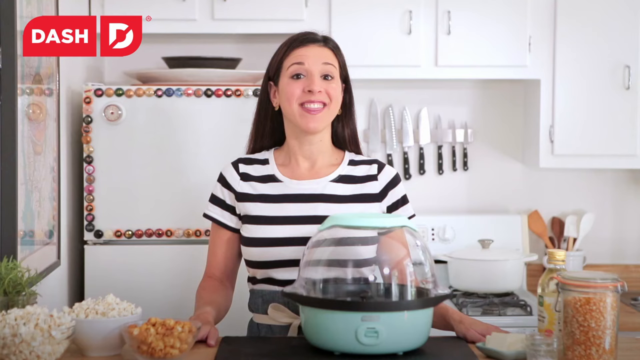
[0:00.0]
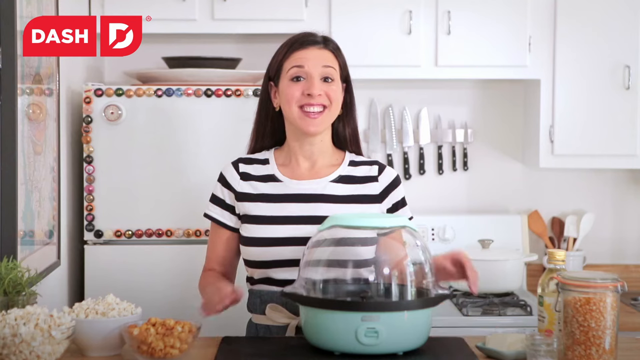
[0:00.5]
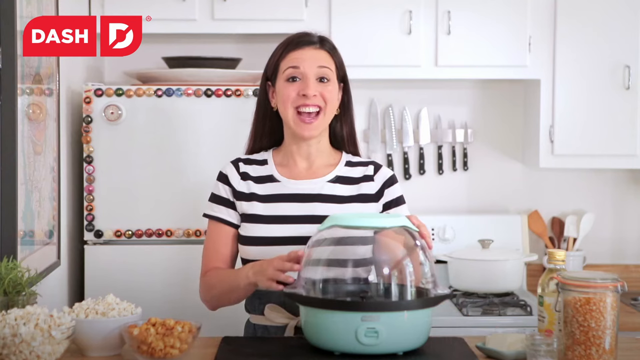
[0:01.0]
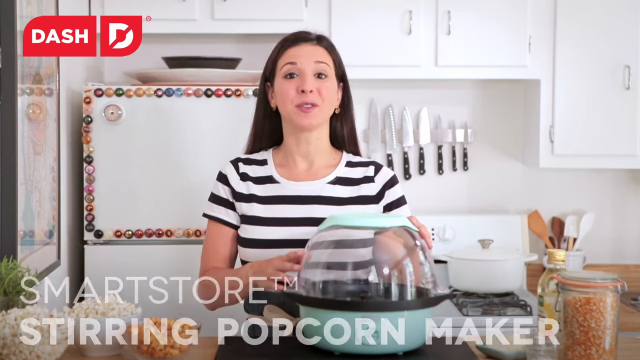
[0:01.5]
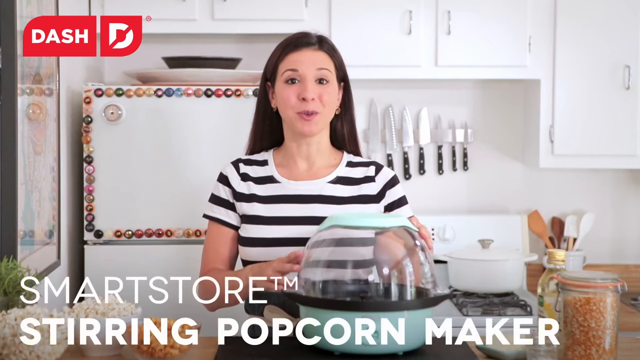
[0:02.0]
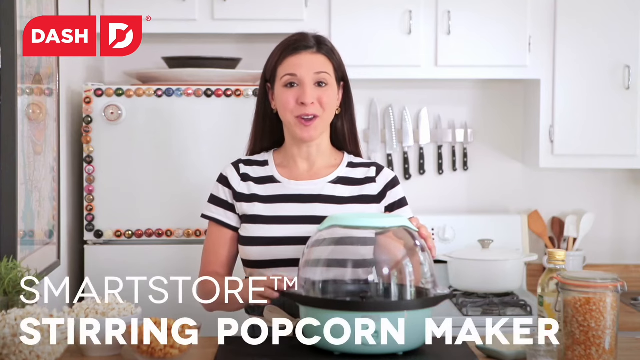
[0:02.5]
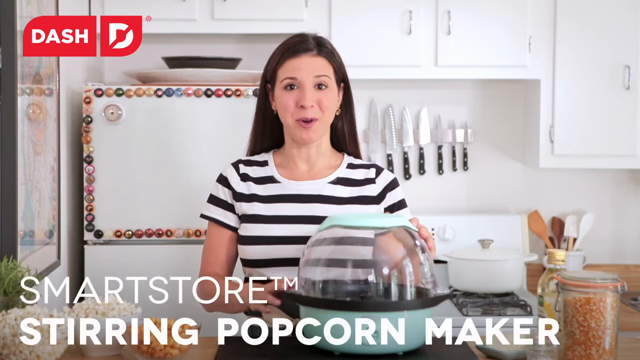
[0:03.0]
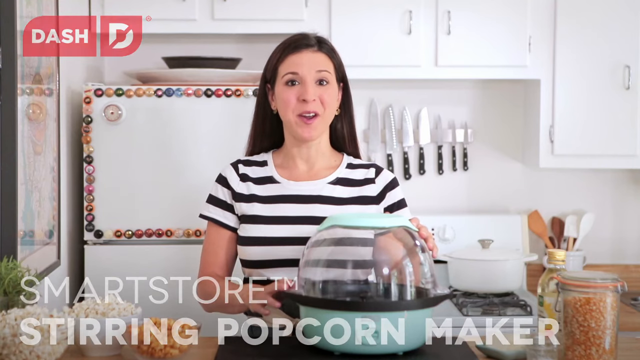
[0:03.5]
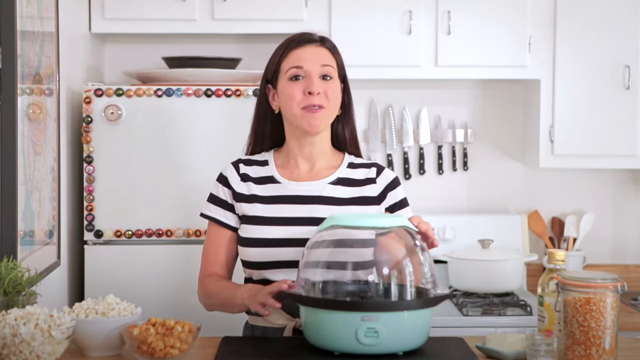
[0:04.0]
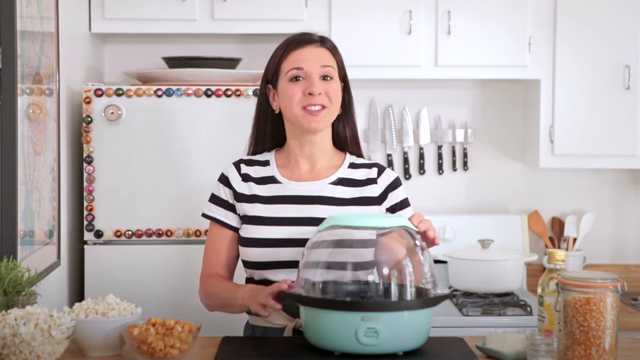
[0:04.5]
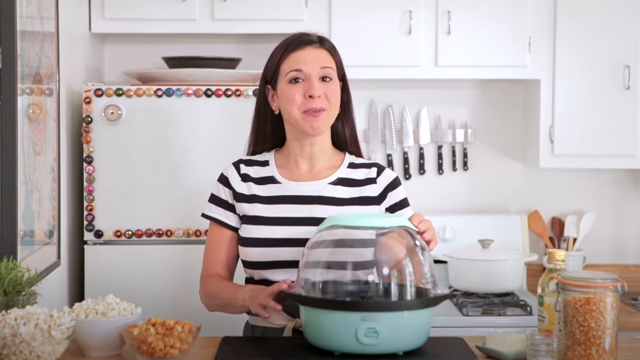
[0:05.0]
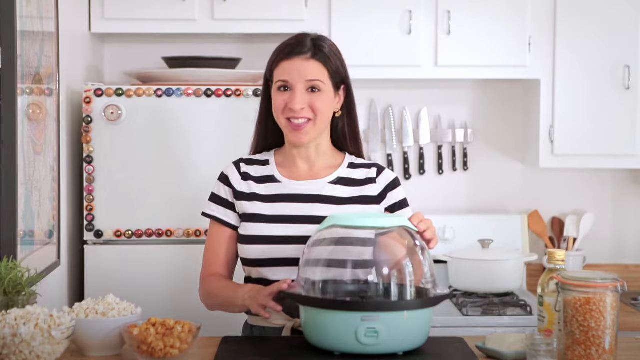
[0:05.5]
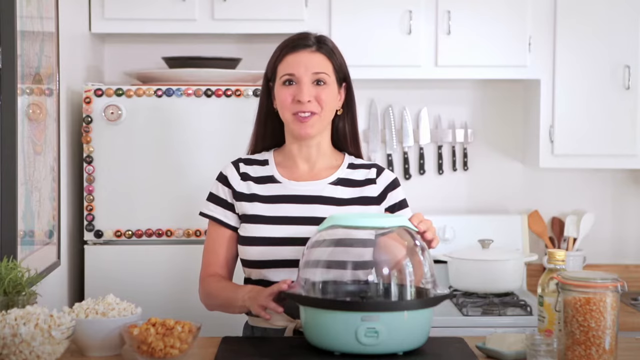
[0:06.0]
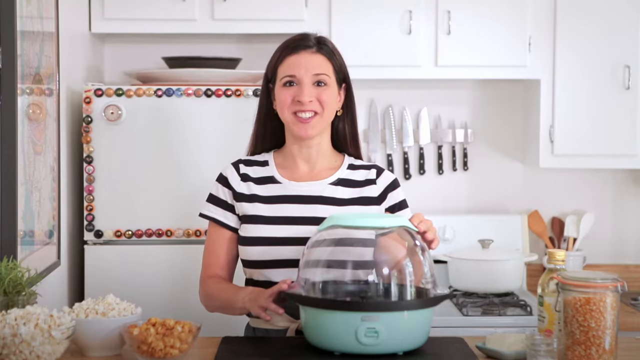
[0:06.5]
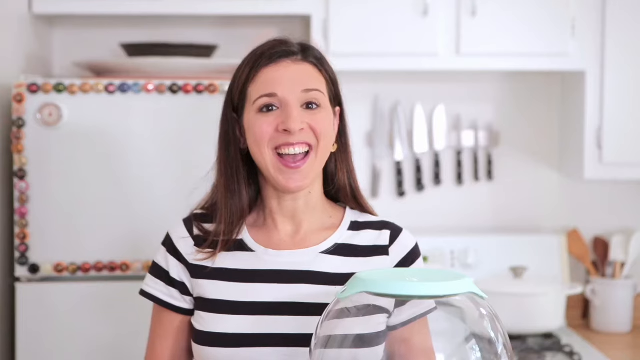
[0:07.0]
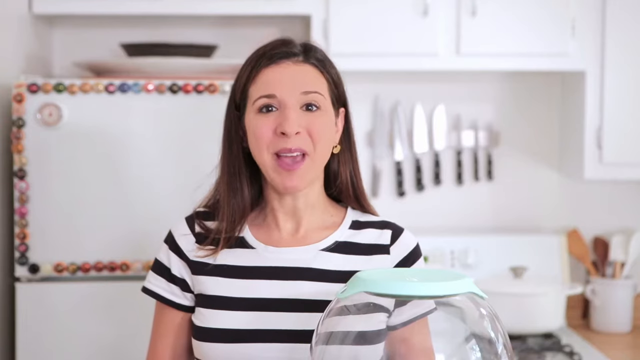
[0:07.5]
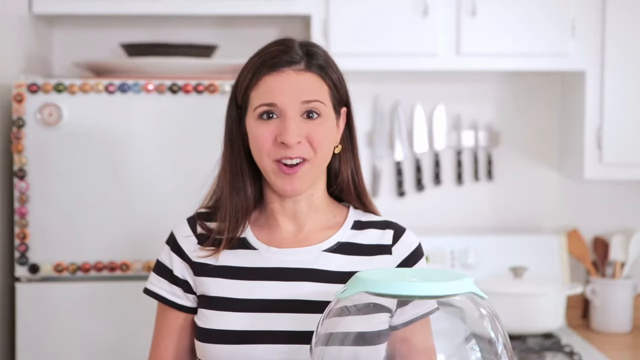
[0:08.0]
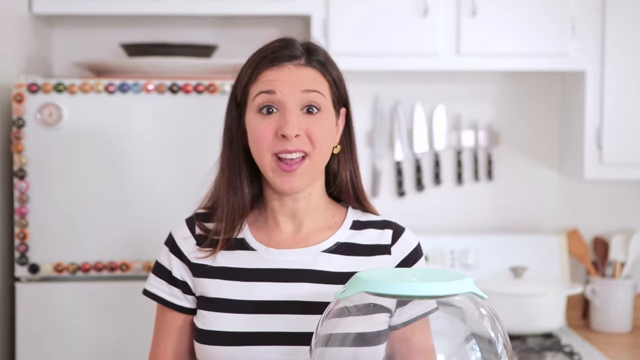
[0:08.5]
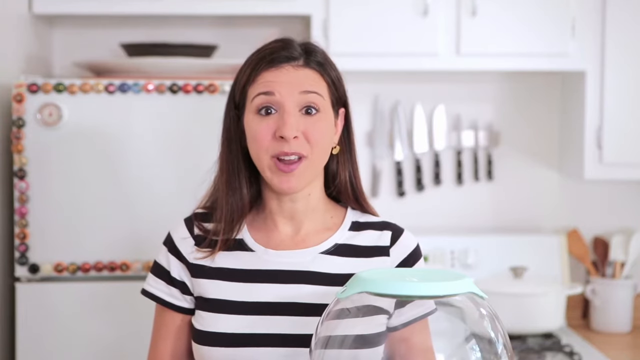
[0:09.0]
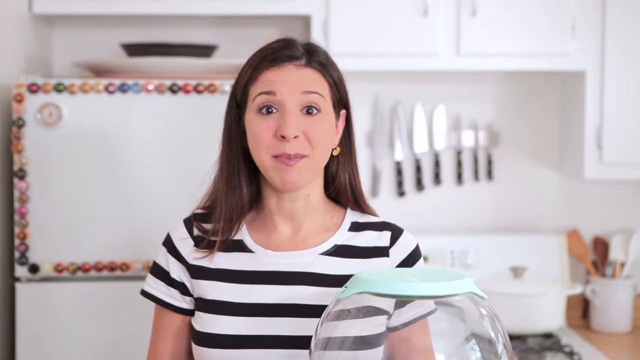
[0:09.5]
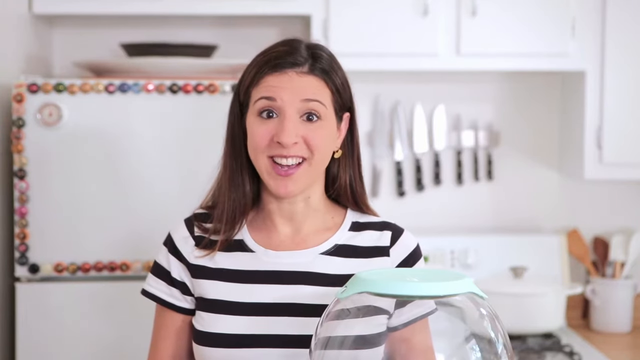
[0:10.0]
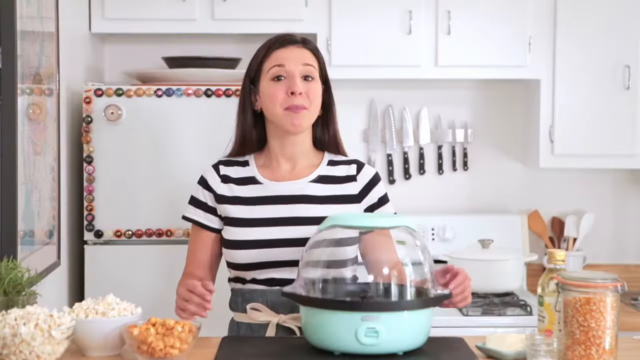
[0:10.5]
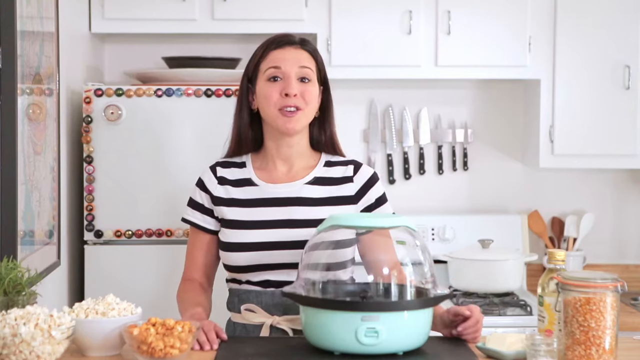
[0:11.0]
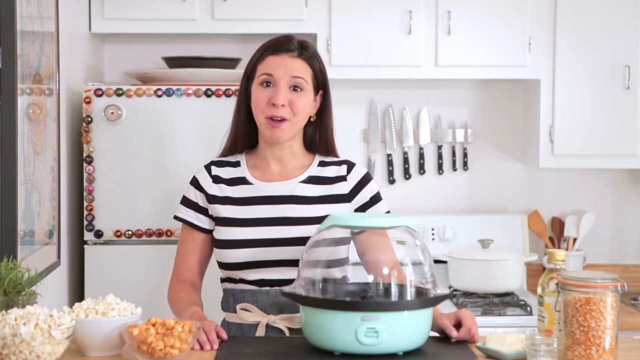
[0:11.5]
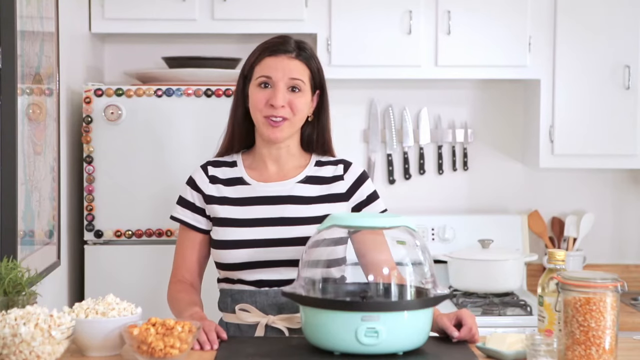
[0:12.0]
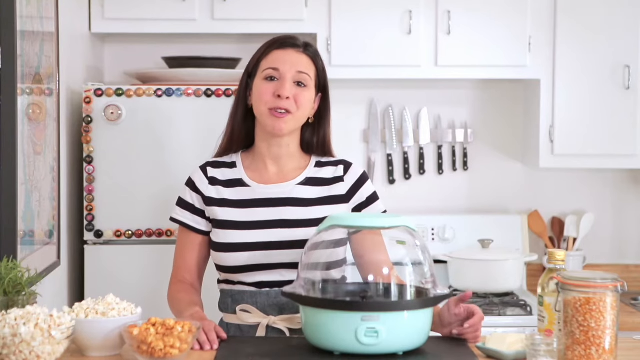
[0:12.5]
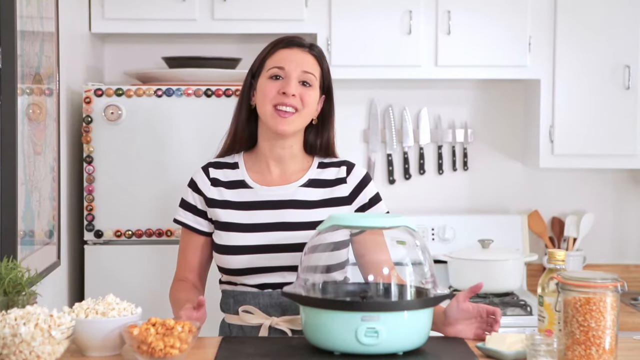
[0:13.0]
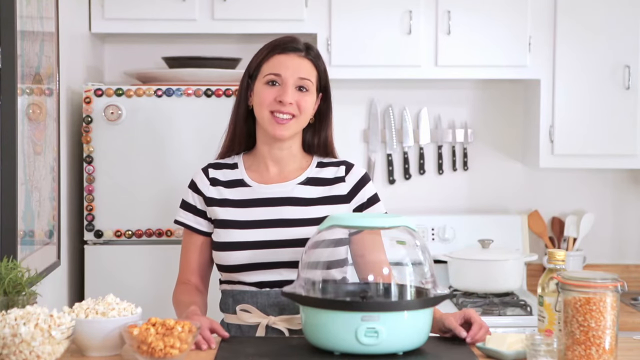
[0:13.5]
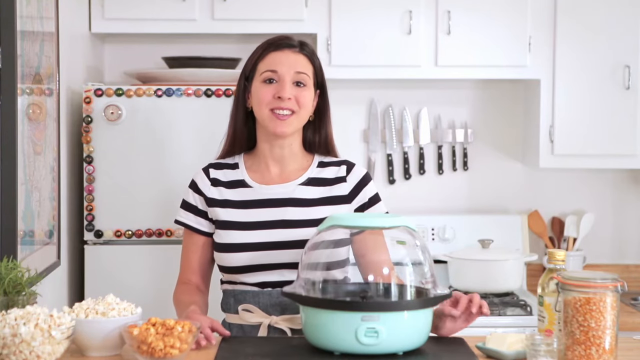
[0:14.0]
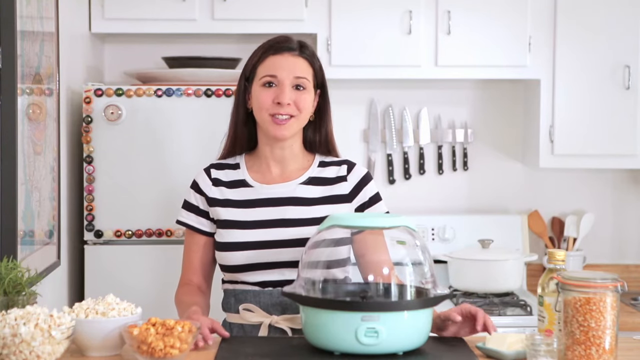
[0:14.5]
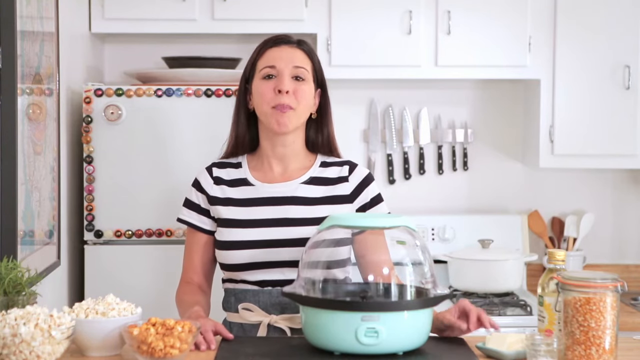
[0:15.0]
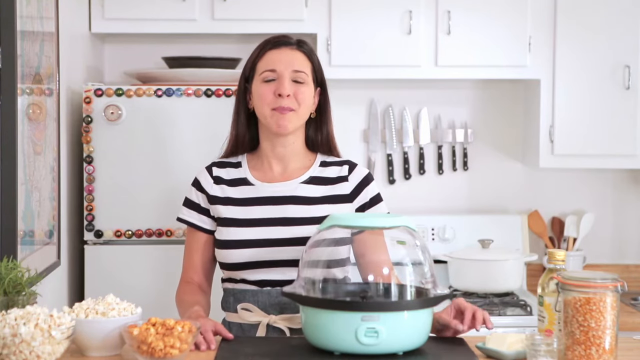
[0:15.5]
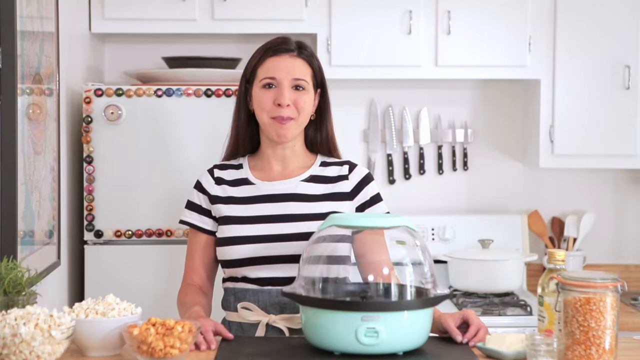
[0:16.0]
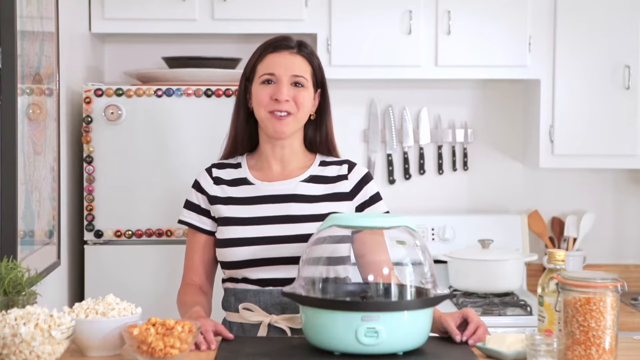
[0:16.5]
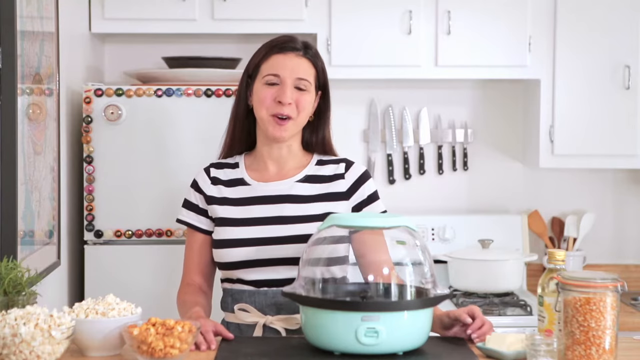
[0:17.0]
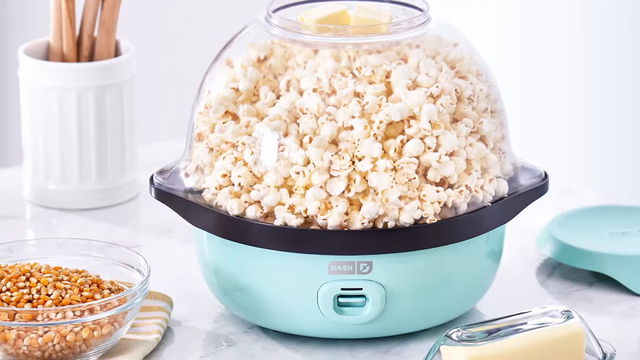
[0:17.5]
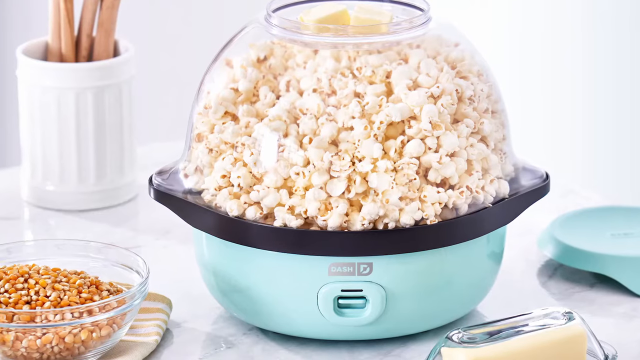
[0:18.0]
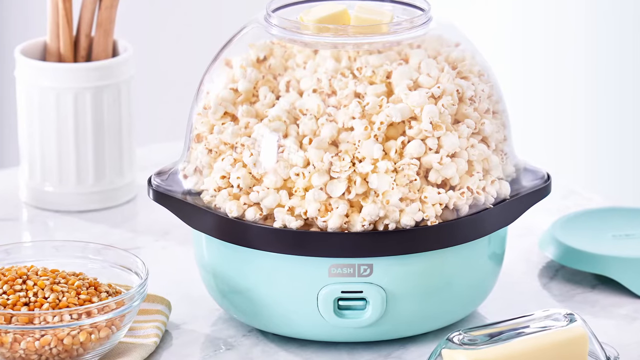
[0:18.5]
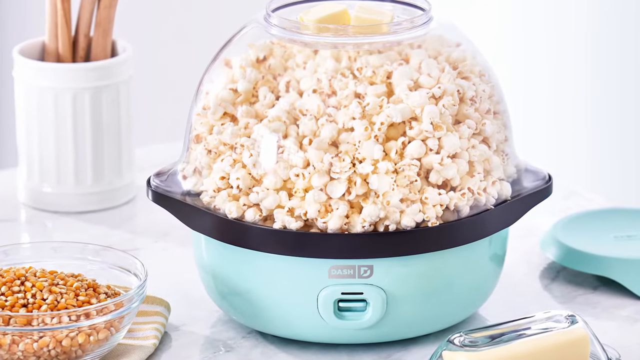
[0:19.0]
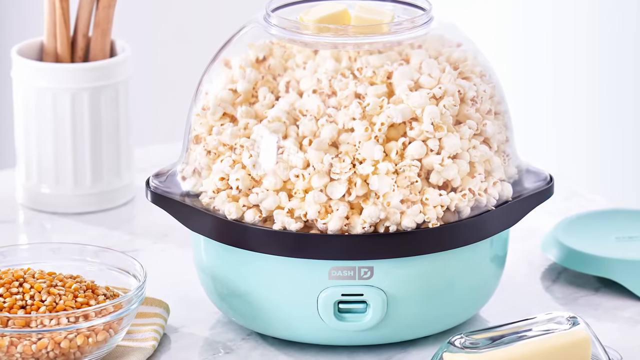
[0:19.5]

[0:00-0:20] A woman who appears to be in her thirties, possibly her mid-30s, and looks young, is in a kitchen. She wears a T-shirt with black and white stripes and has brown hair. There is a board that she apparently uses to write her menus, and knives hang on the wall. A white stove is behind her. She is holding what looks like a popcorn maker, a stirring popcorn maker, and is apparently about to use it to make popcorn and show how it operates.